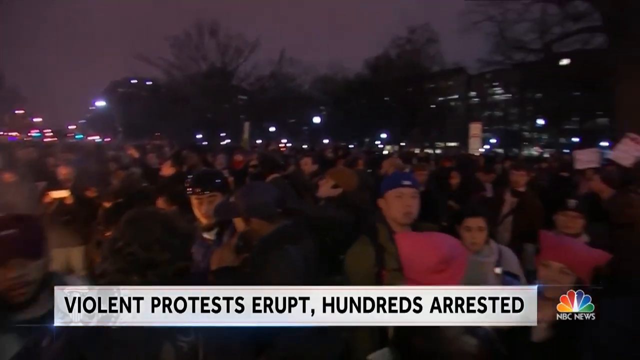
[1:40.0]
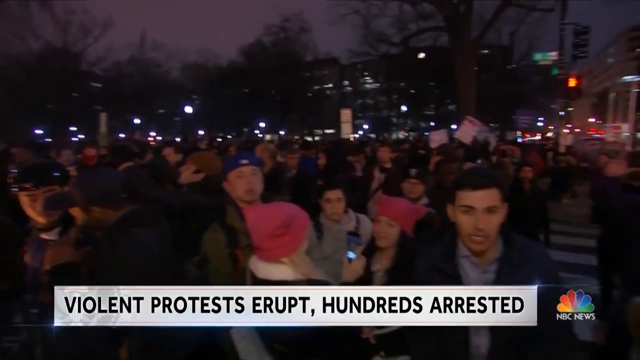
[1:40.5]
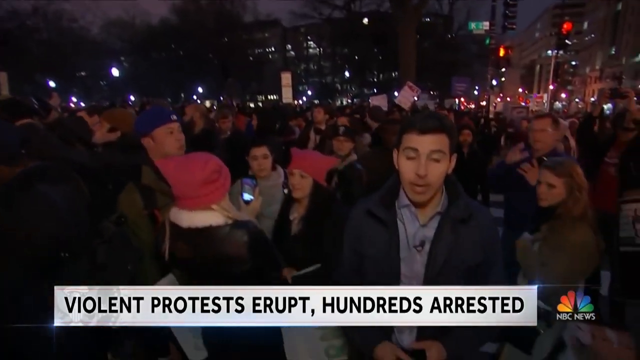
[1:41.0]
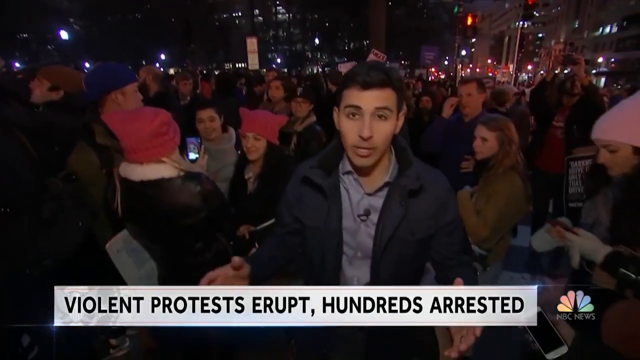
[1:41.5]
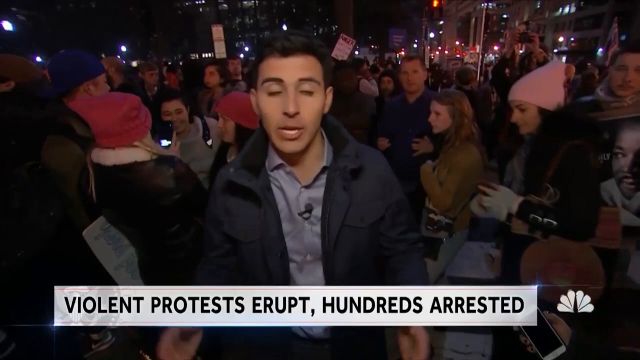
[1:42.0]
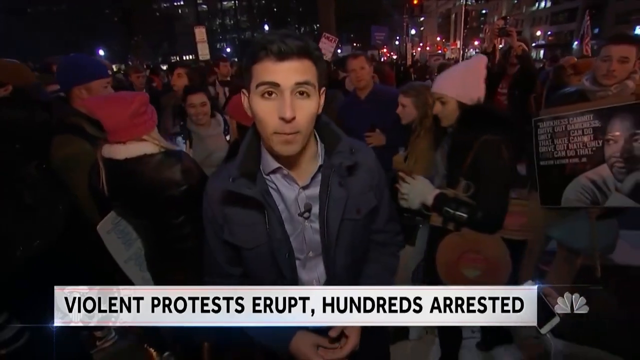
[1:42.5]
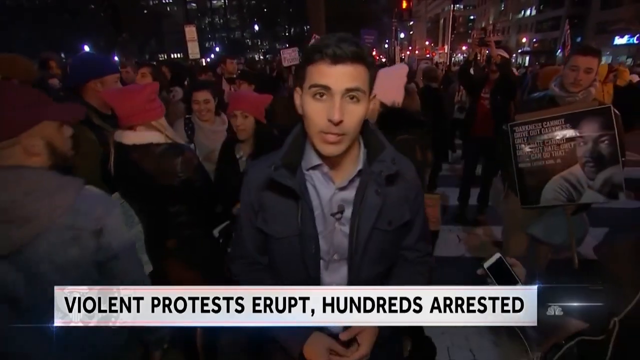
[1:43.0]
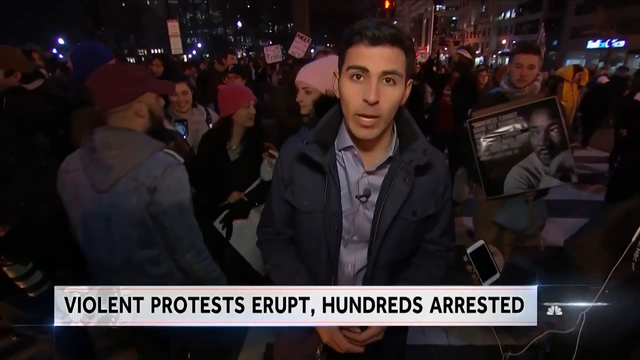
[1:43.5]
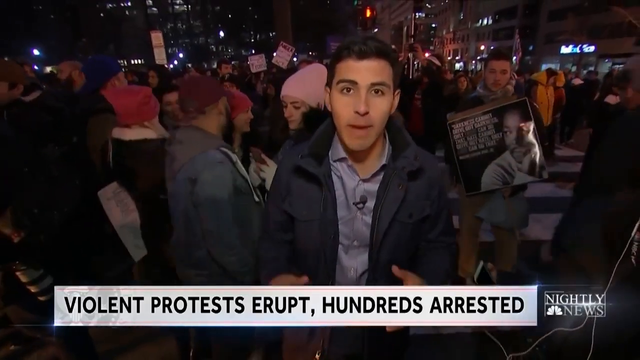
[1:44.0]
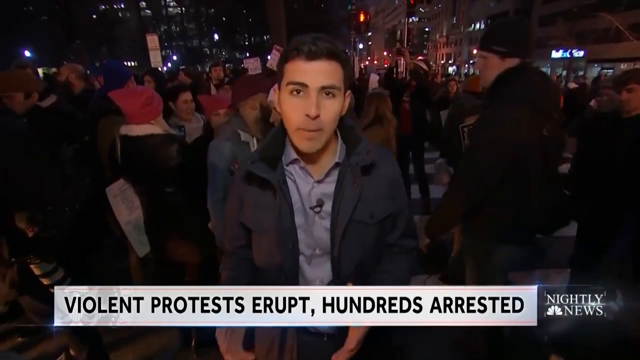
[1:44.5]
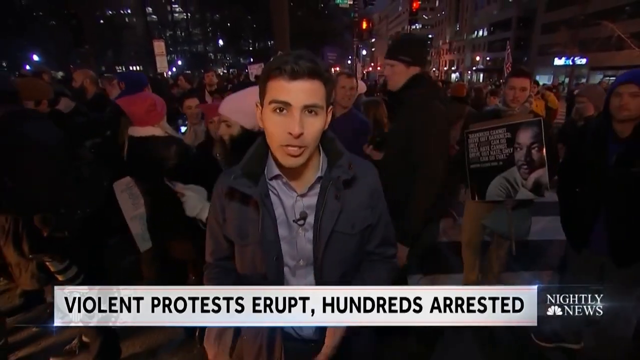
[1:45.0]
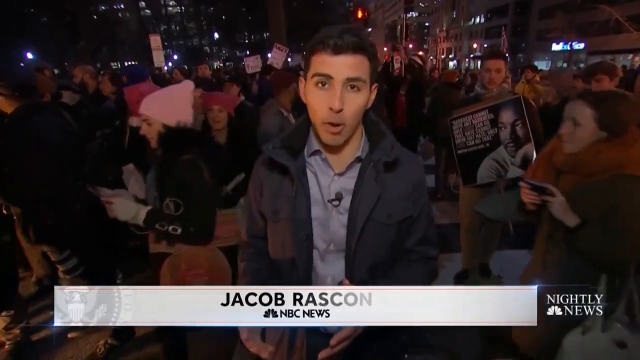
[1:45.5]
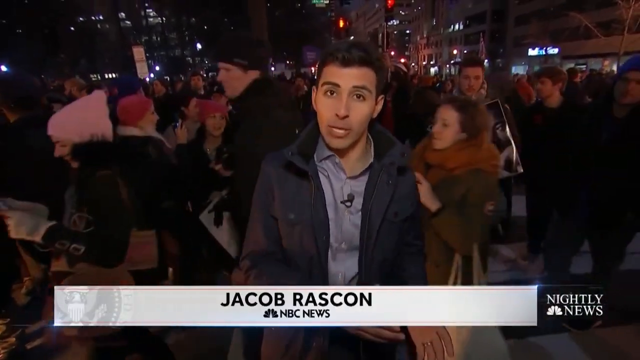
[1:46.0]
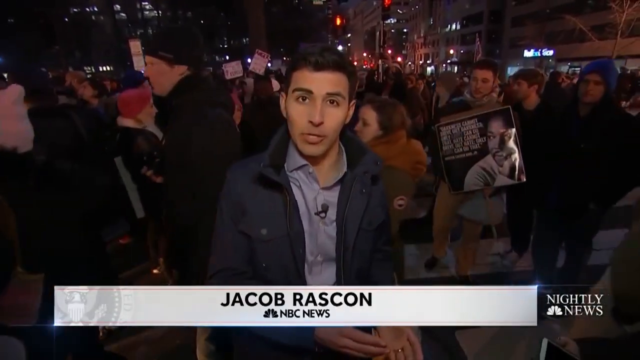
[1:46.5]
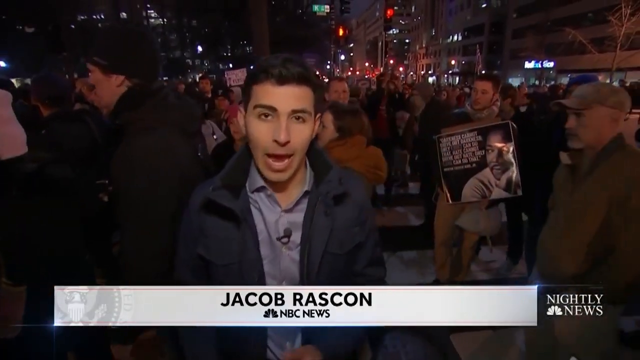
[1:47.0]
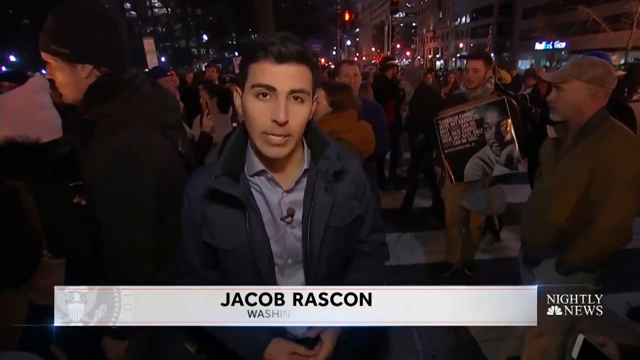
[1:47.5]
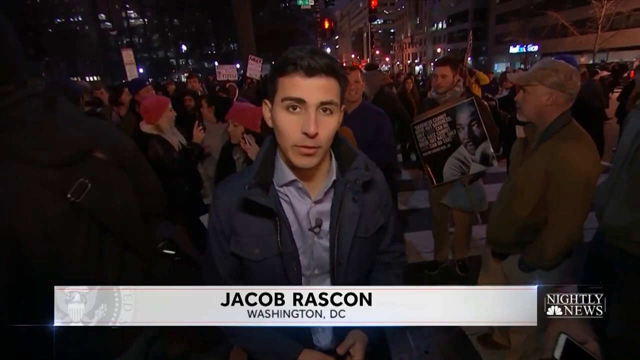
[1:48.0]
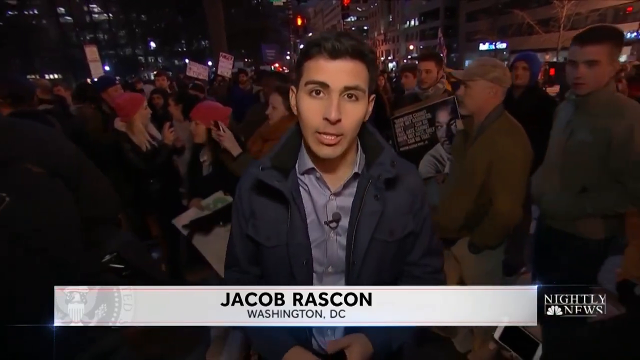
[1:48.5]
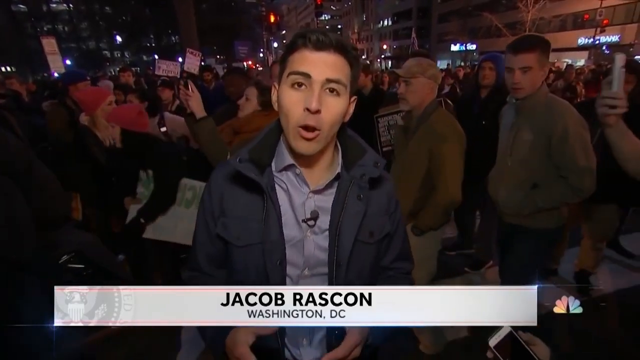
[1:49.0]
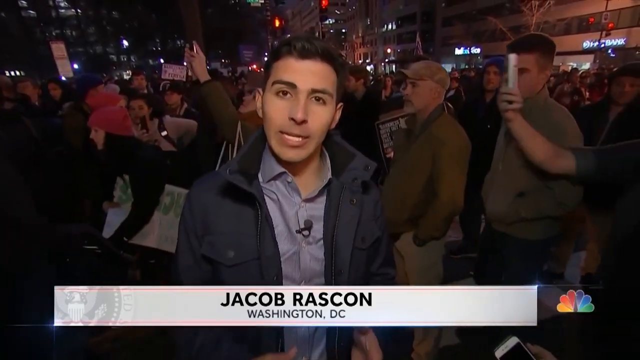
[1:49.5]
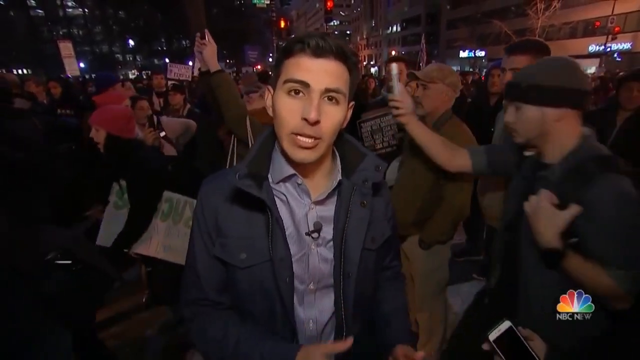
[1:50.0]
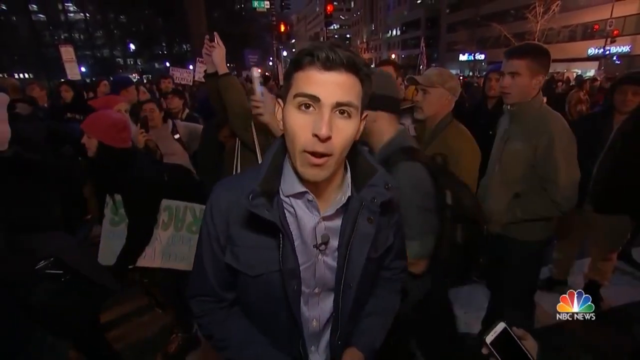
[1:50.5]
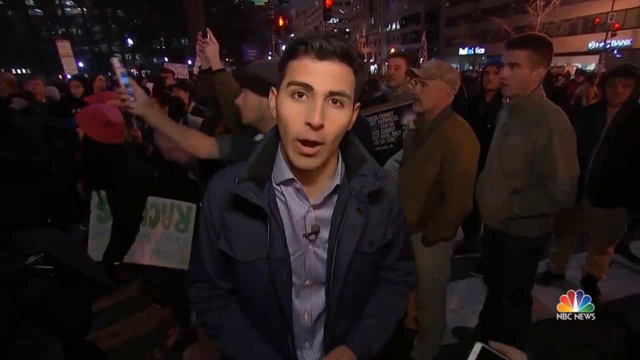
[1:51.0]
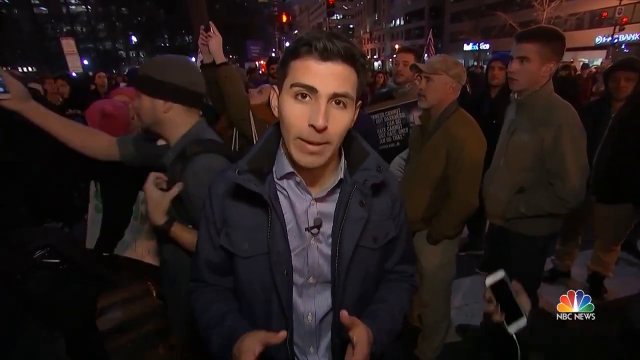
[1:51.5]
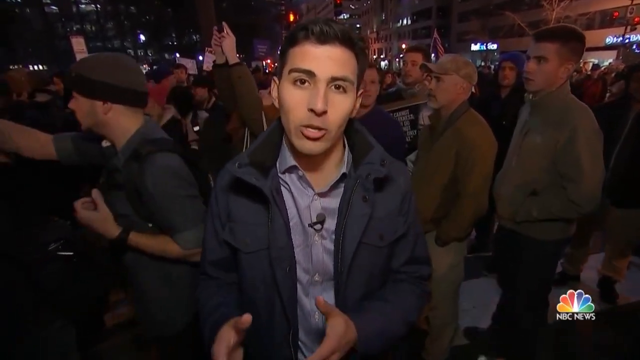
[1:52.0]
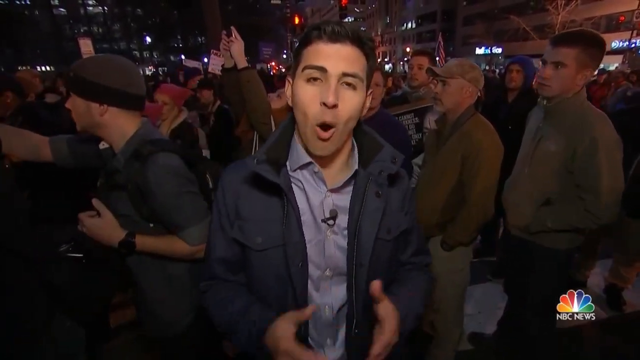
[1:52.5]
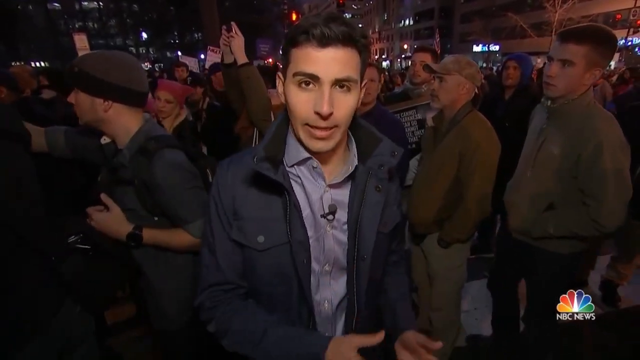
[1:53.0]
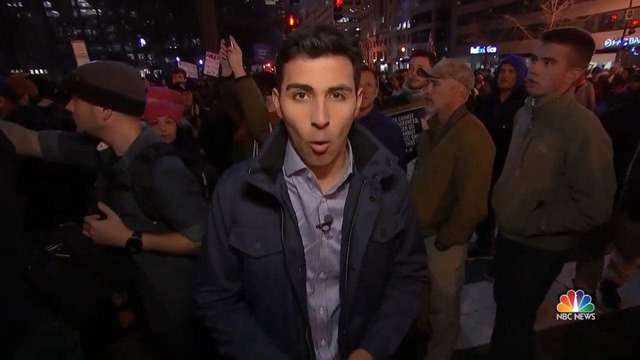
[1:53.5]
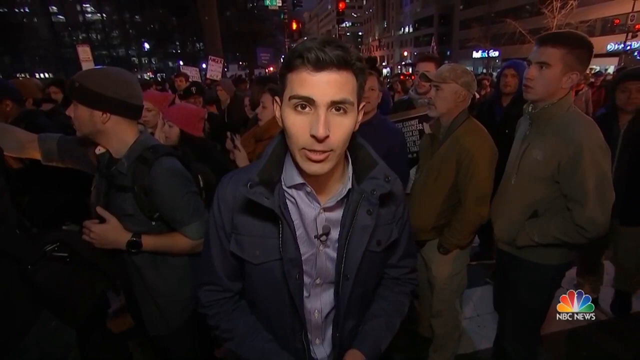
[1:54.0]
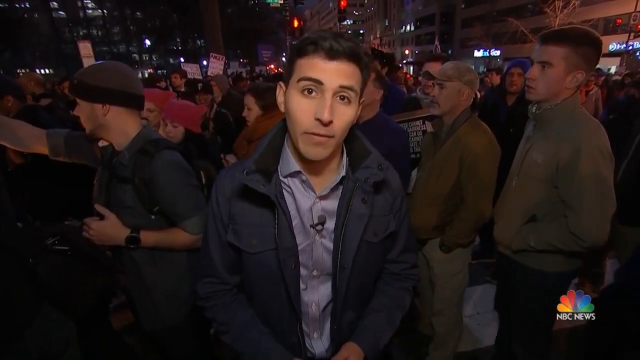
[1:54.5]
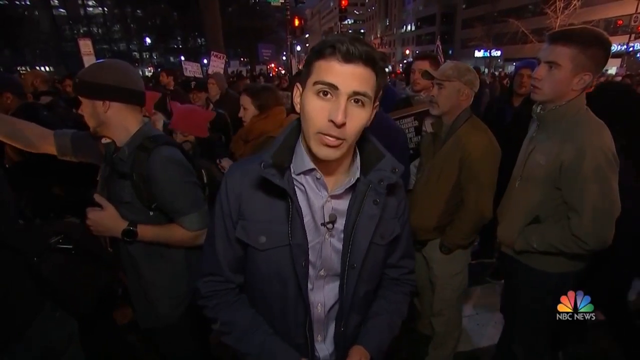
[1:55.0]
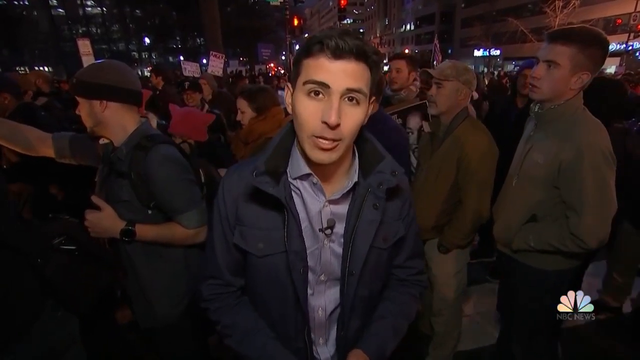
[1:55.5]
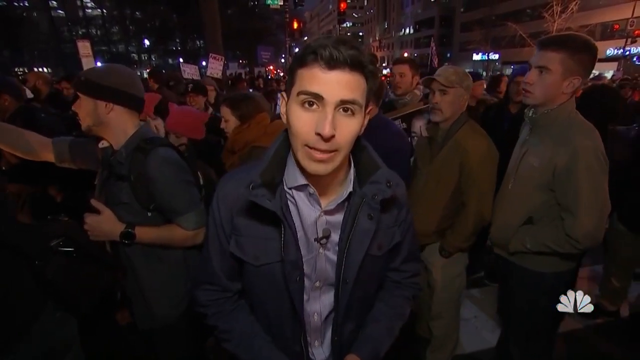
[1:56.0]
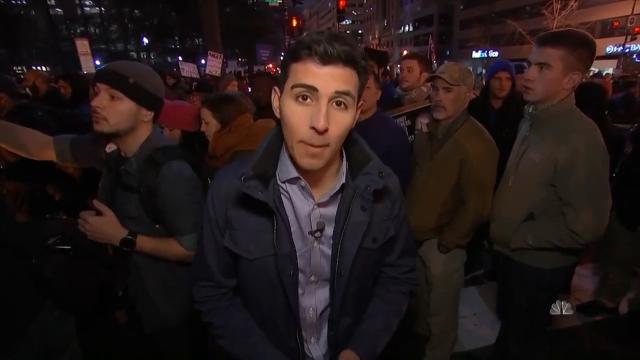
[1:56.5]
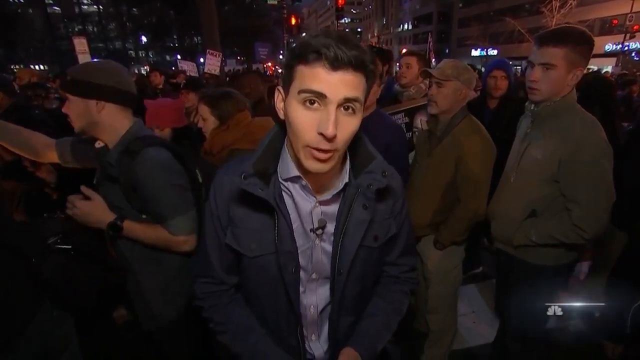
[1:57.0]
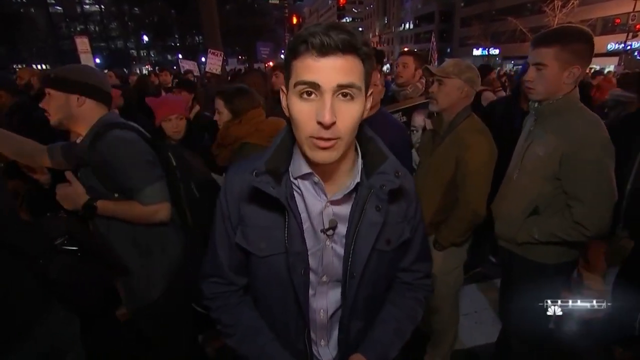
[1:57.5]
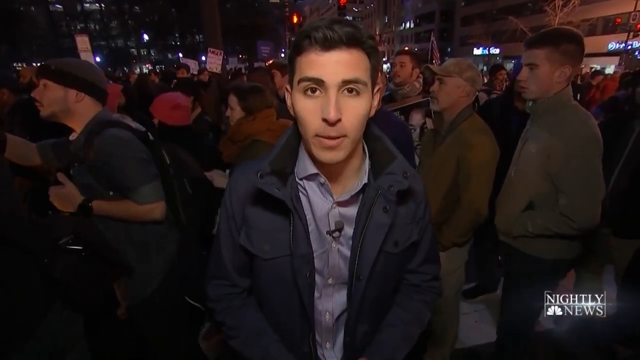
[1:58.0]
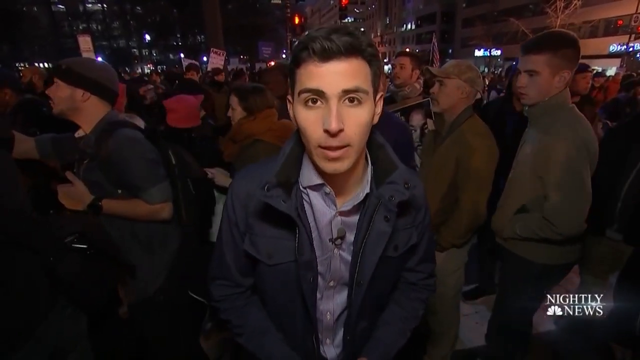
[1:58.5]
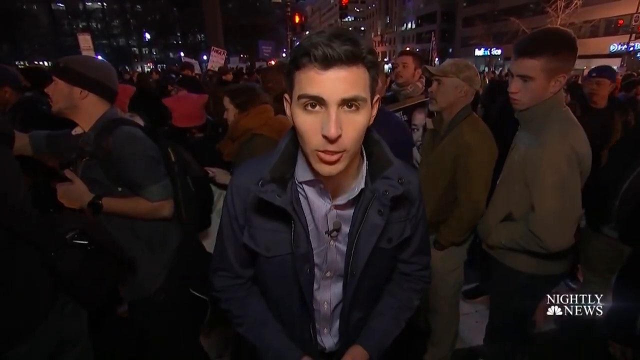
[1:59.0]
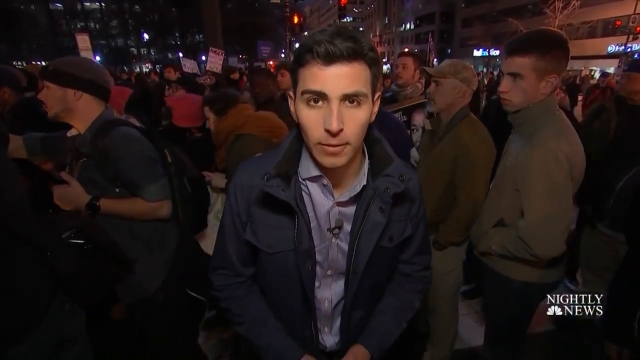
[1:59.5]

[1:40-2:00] At night on inauguration day, people walk around in the streets. A news reporter in a dark blue jacket talks to the camera while onlookers in coats watch what is happening in the streets; it is quite cold outside. The footage is from NBC News. In the night-time urban setting, hundreds of people stand in the streets near an intersection; many hold phones, talk to each other, record the events and try to get a better view. From this angle it is not clear what is happening, though it is presumably a protest.